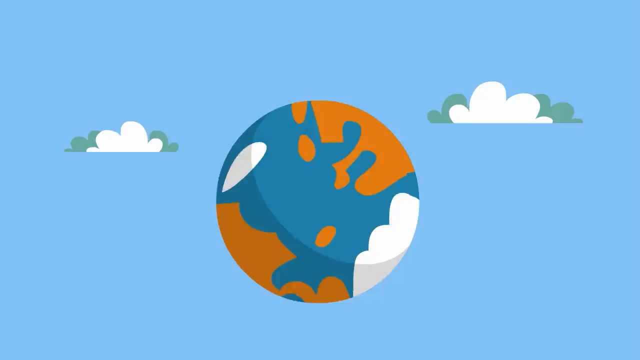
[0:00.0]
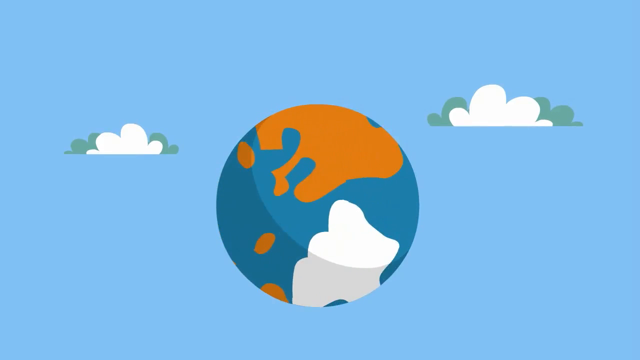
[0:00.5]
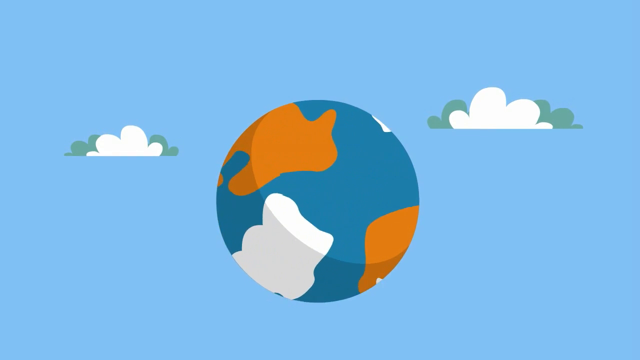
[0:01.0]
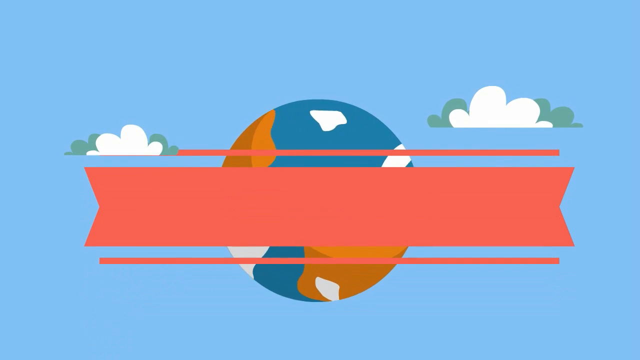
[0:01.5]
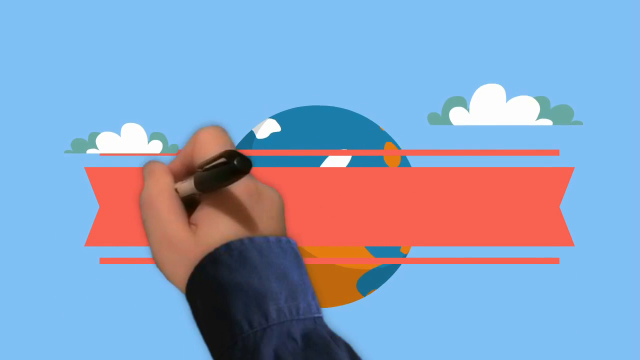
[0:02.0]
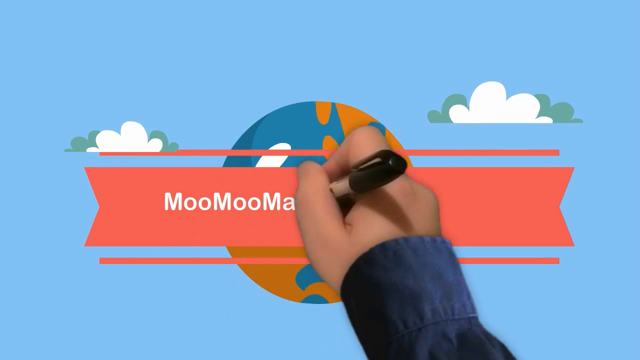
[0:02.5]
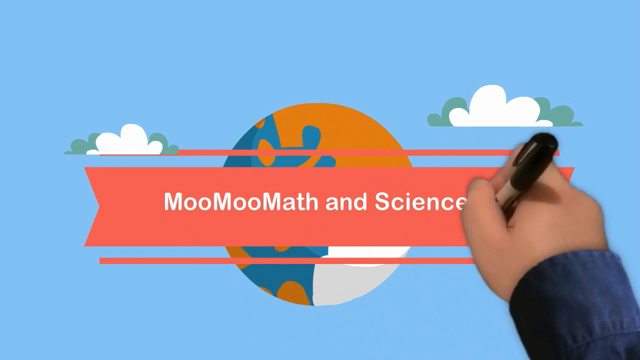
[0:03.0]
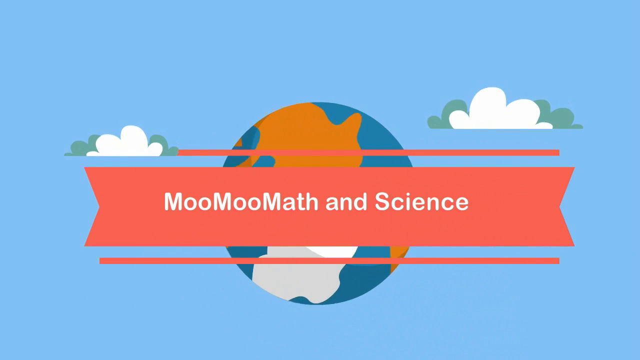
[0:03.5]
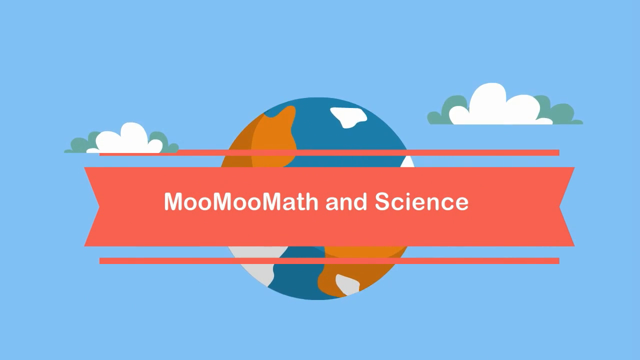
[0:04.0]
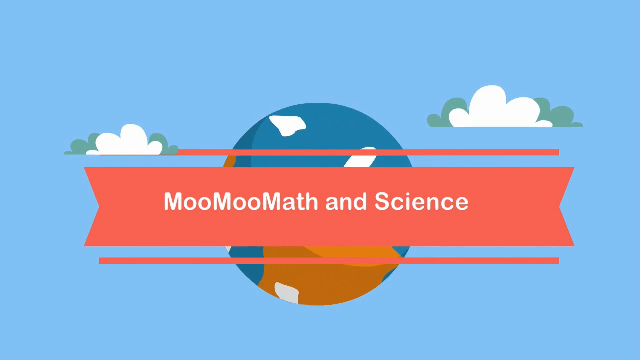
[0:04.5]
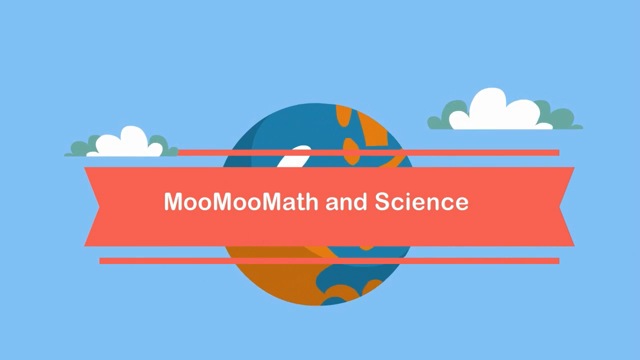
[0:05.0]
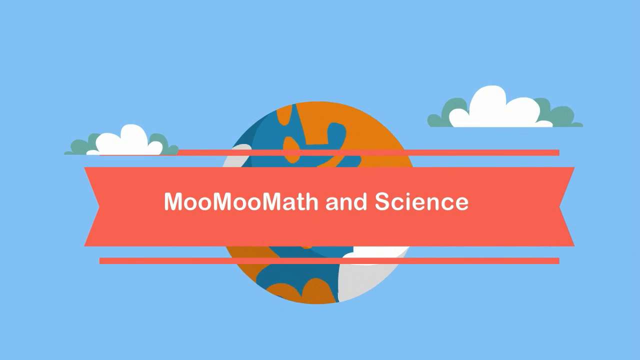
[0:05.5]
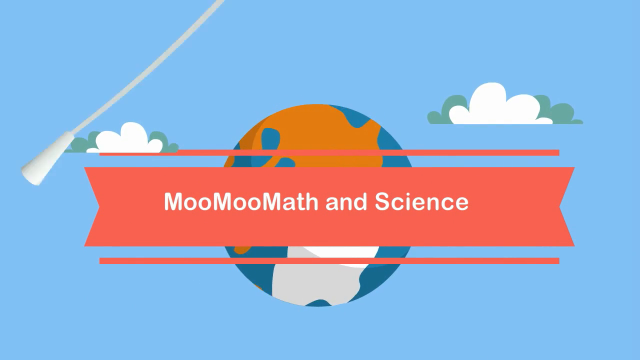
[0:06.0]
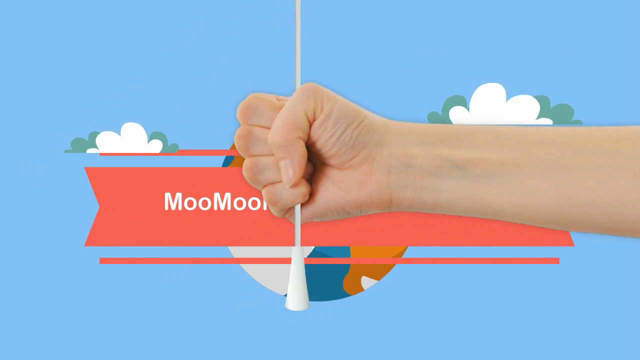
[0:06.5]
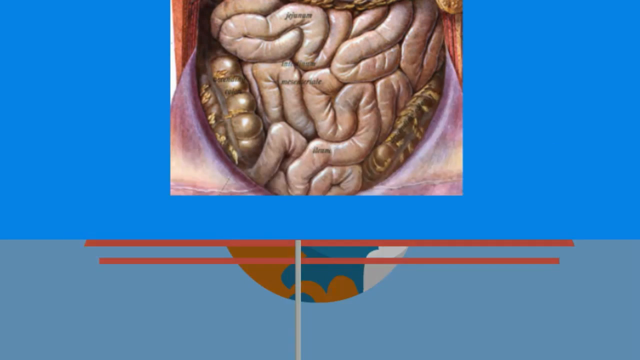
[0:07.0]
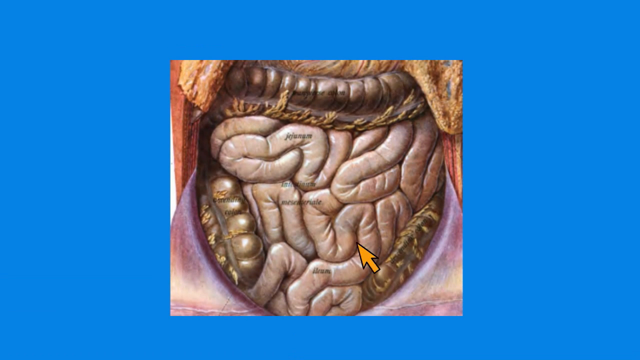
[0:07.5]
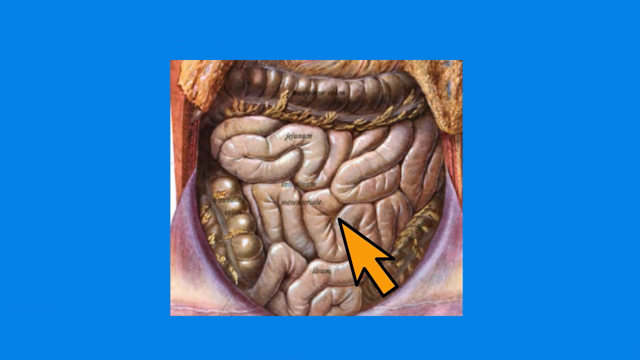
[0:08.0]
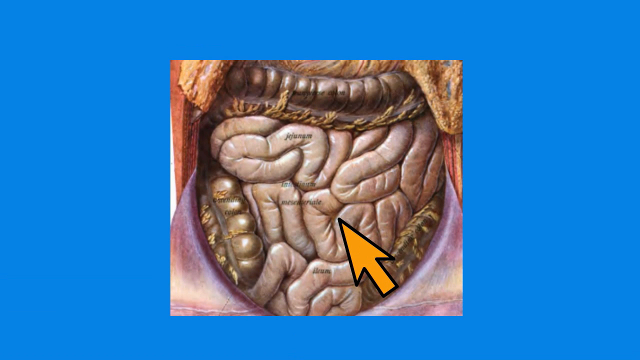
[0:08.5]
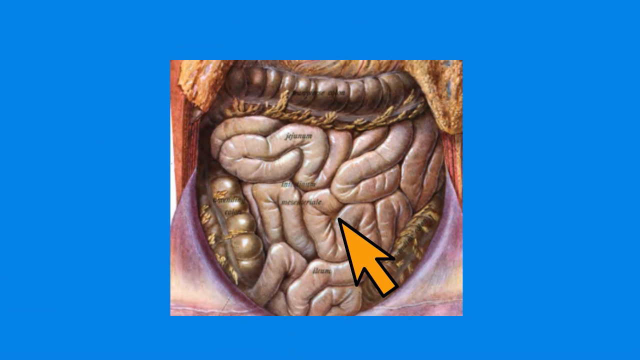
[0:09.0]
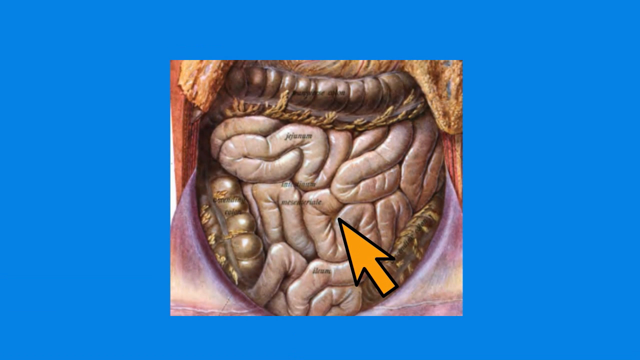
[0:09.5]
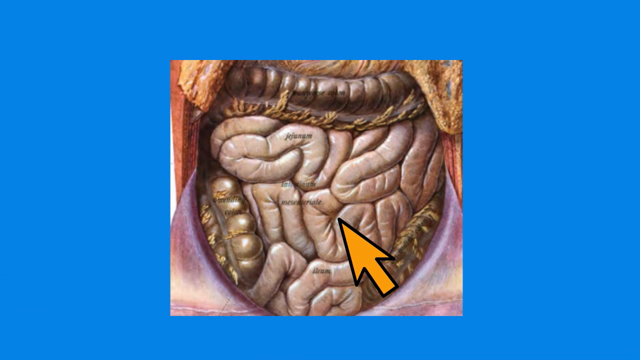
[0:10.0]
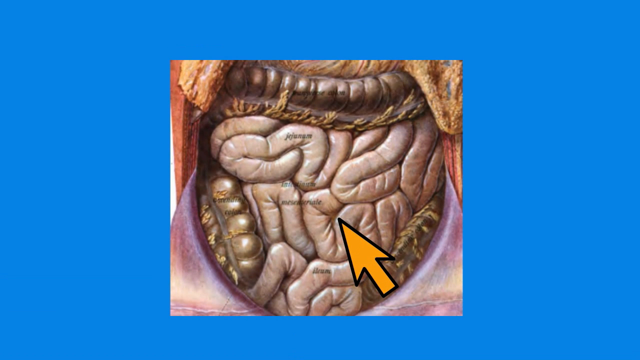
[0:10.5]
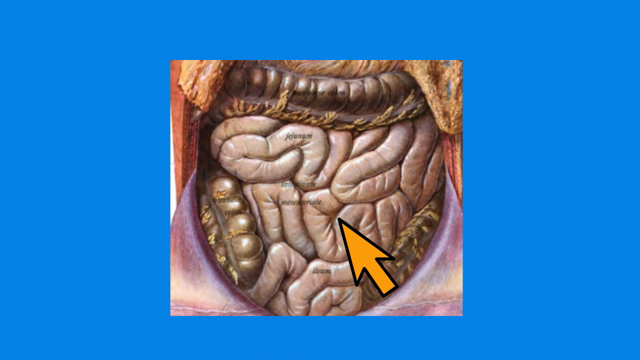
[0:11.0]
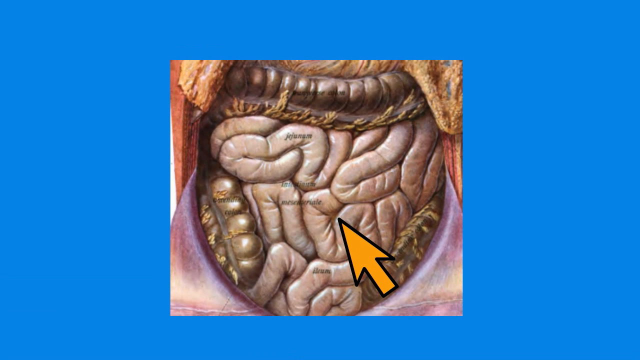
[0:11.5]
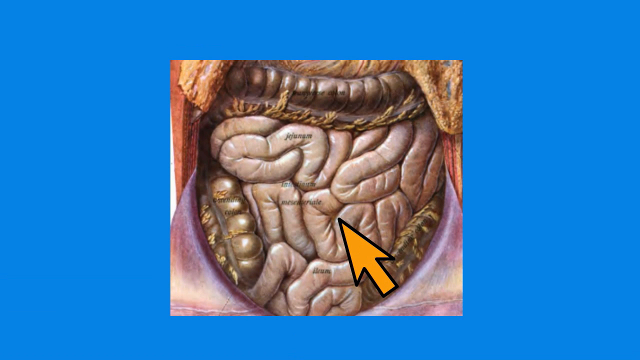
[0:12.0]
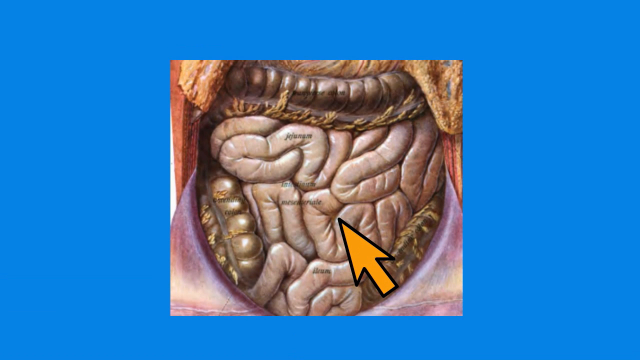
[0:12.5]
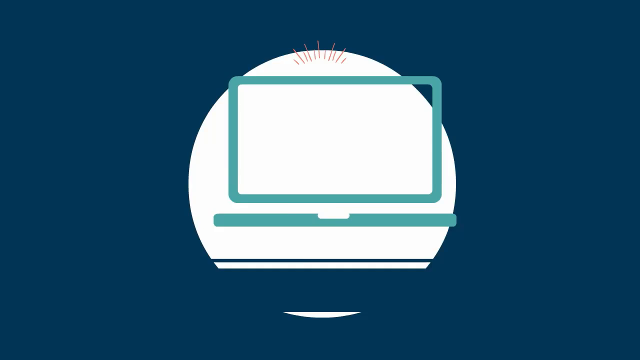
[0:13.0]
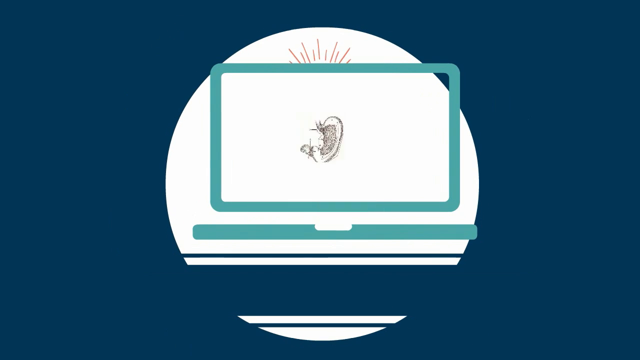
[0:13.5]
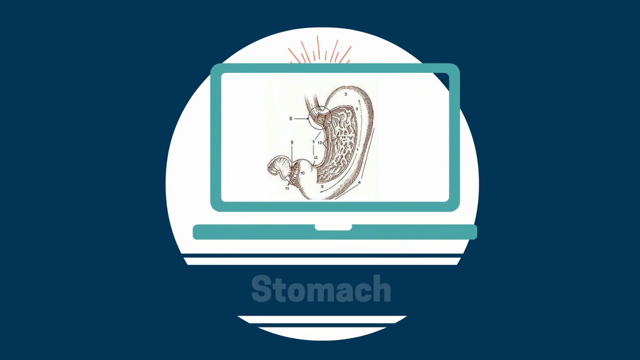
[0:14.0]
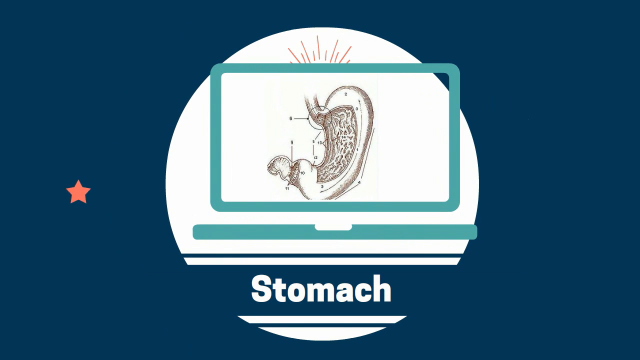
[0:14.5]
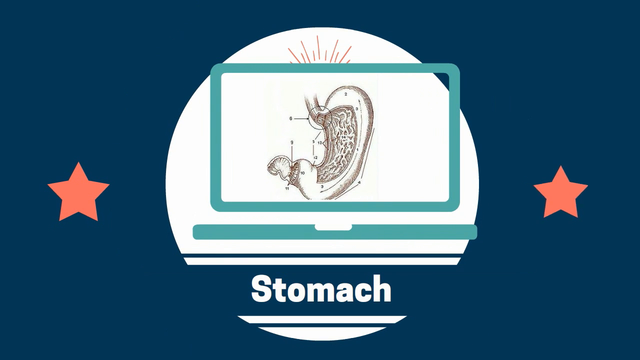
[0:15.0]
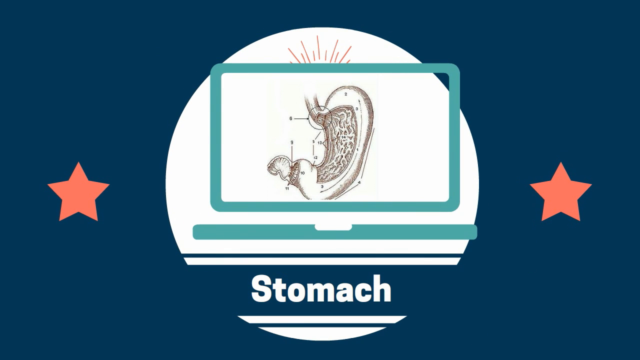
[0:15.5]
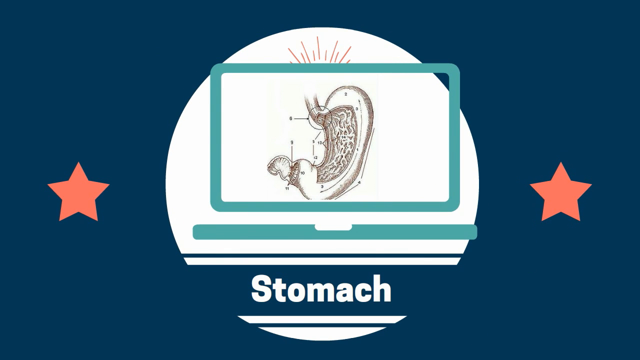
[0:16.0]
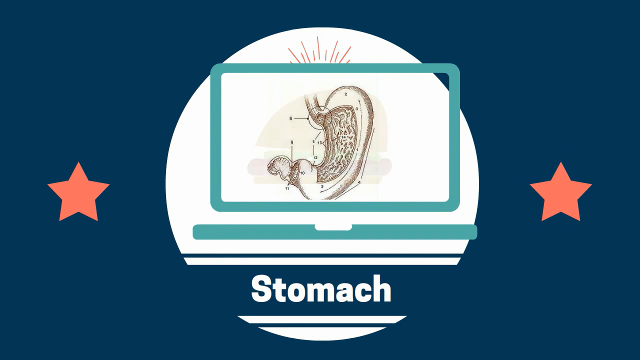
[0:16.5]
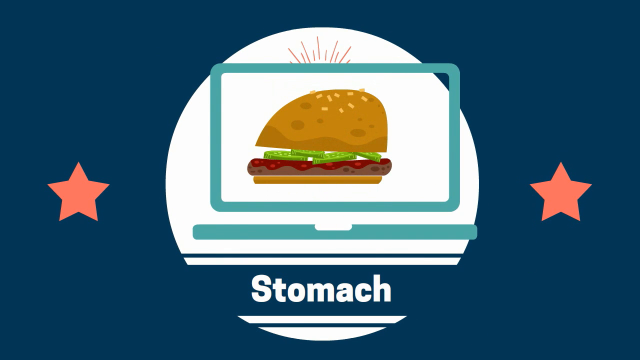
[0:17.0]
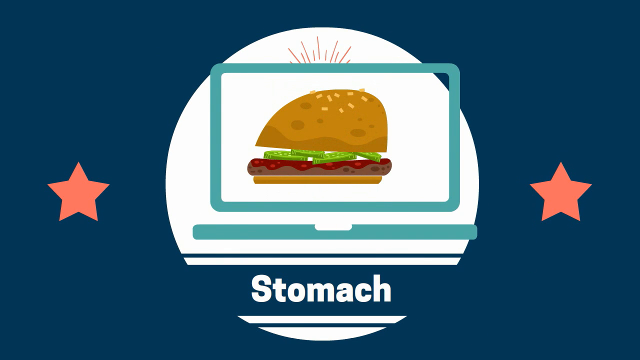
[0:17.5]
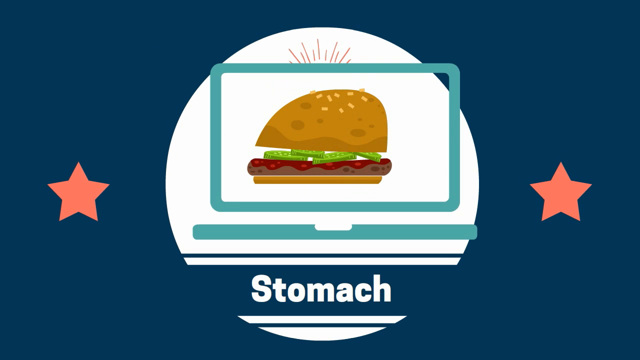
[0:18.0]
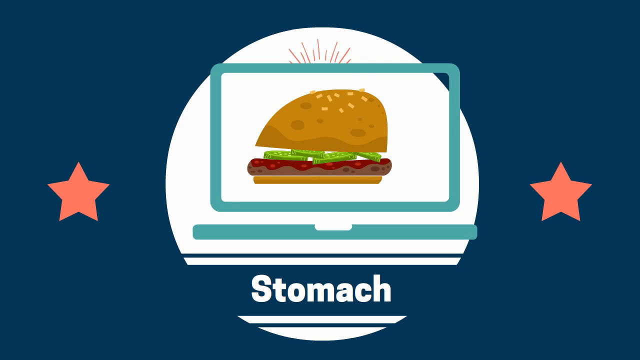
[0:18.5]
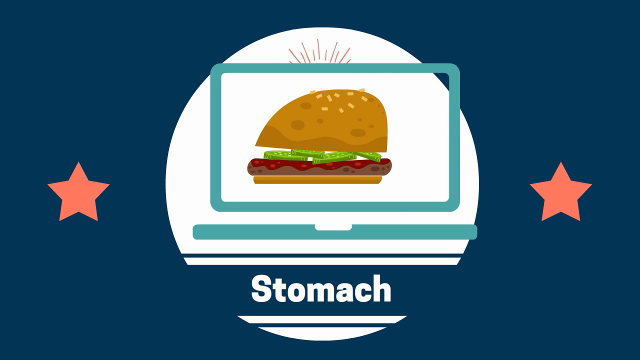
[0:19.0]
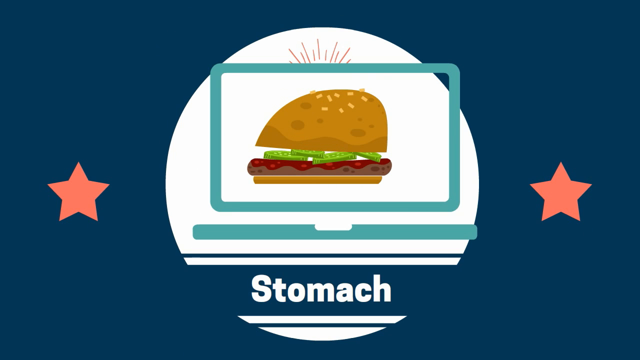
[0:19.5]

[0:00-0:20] The video opens on a blue background with a stylized planet Earth colored orange, white and blue inside. On each side of the planet, one on the left and one on the right, there is what seems to be a cloud, each colored green and white. Immediately after, a more or less irregularly shaped red banner appears in the center of the frame, and a rather realistic hand comes in from the bottom of the frame holding a sort of pen. The hand moves from left to right, drawing on the banner and writing words in white. Then a white rope appears from above, and another realistic hand pulls down a sort of virtual curtain bearing a photo of what looks like an intestine. An orange arrow with a black border indicates a precise point on this photo. Next comes an image of a stomach with the graphics of a portable computer in water green, two red stars, one on the right and one on the left, and the word "STOMACH" in white at the bottom.